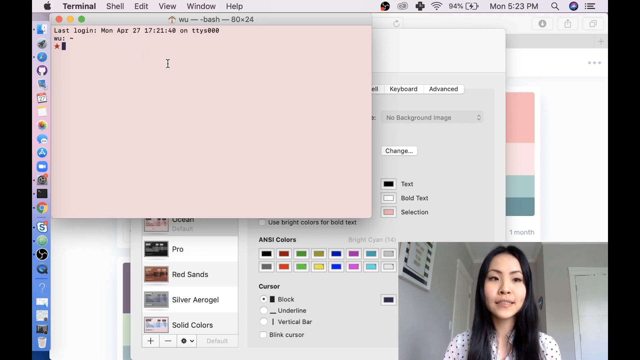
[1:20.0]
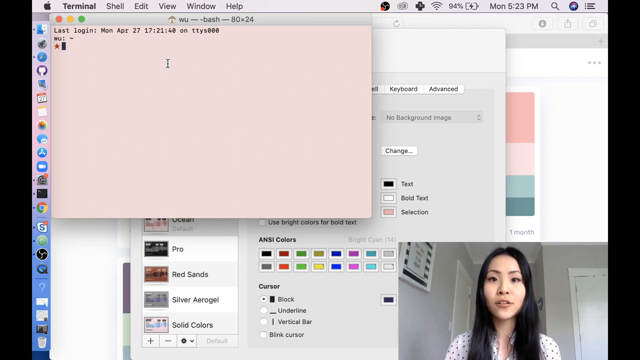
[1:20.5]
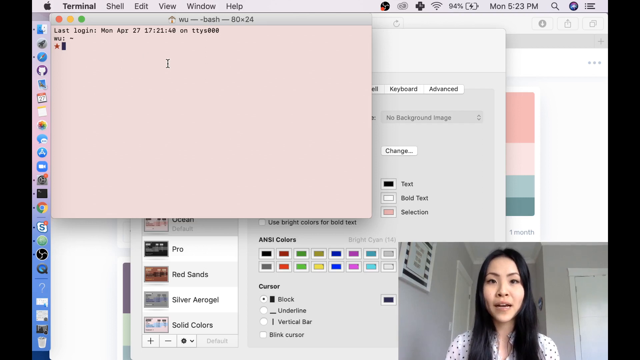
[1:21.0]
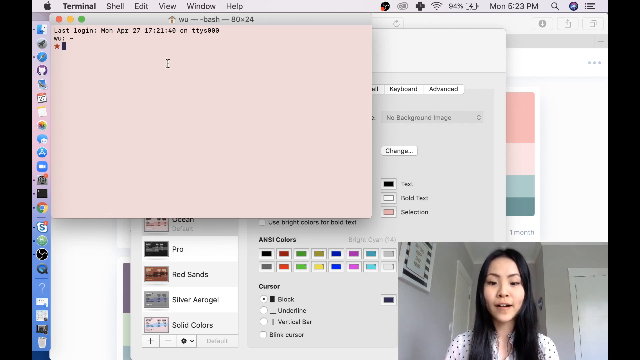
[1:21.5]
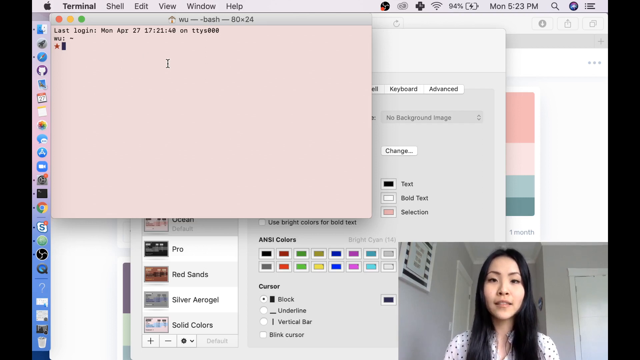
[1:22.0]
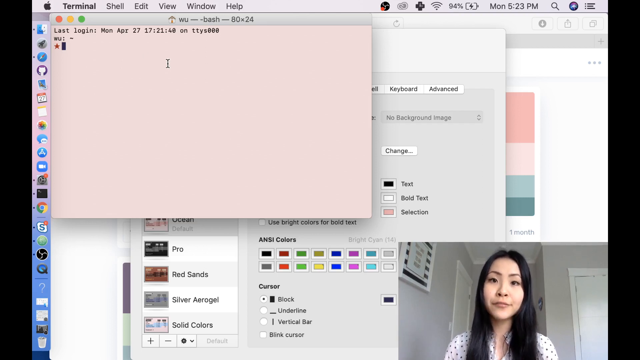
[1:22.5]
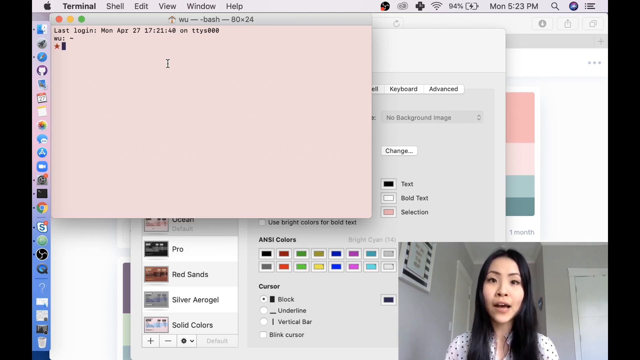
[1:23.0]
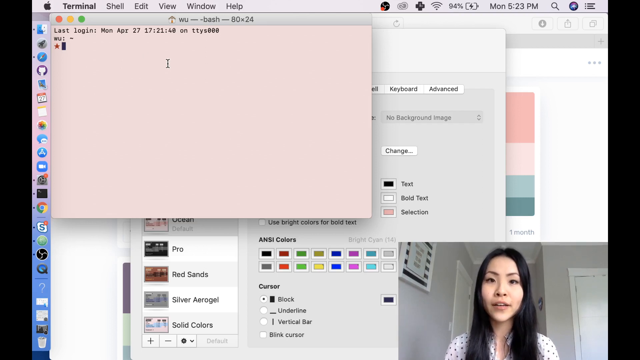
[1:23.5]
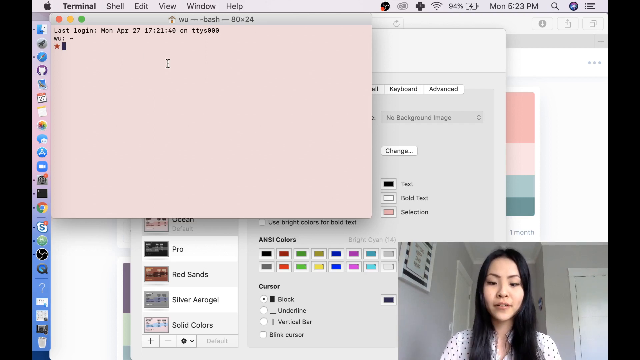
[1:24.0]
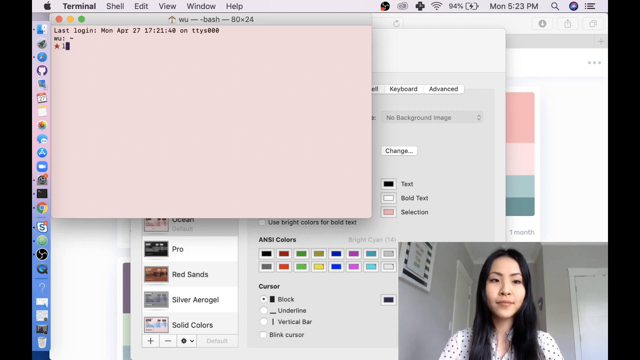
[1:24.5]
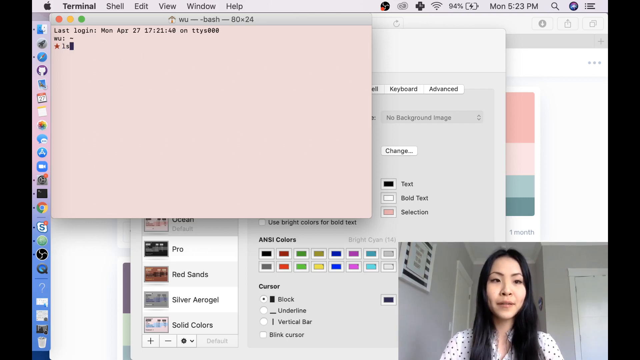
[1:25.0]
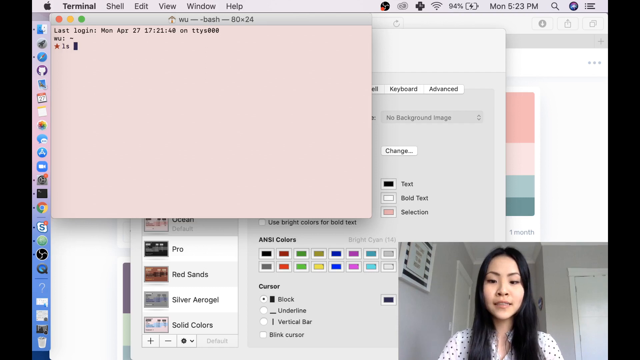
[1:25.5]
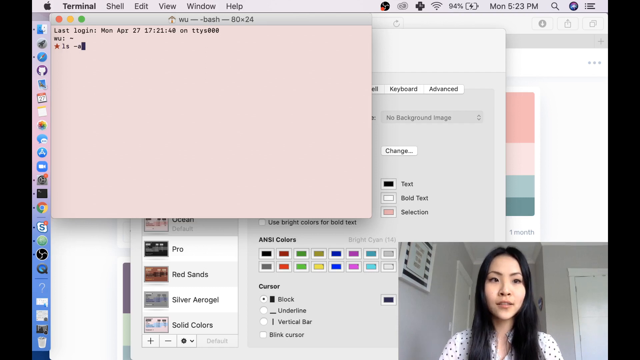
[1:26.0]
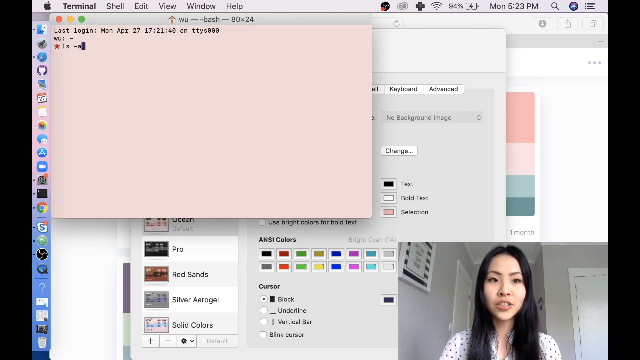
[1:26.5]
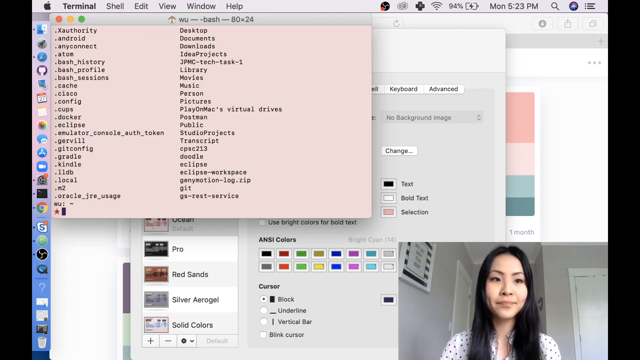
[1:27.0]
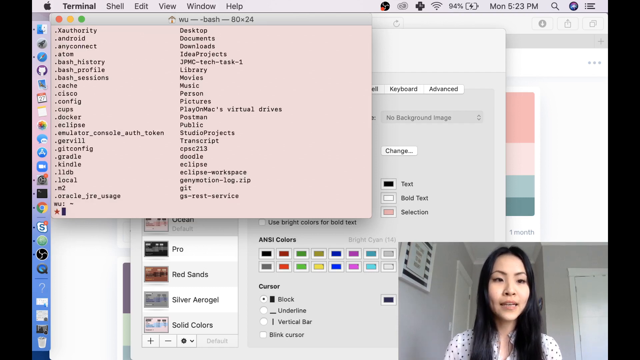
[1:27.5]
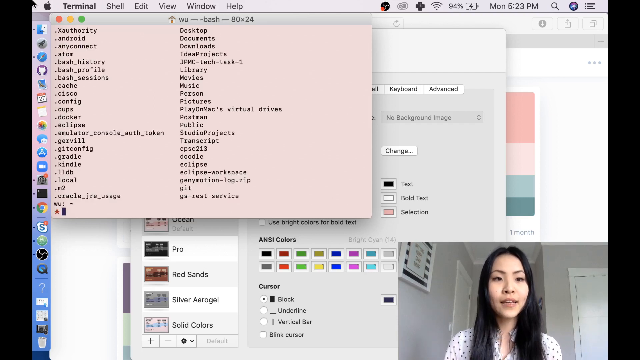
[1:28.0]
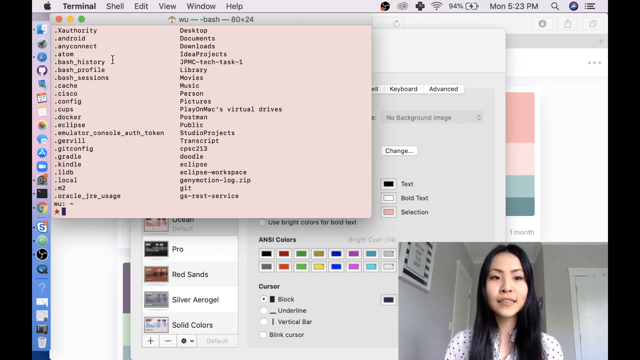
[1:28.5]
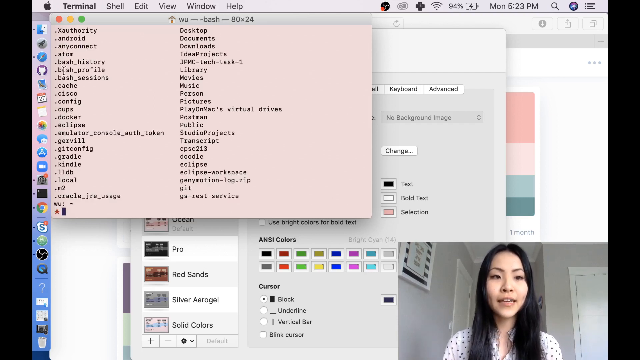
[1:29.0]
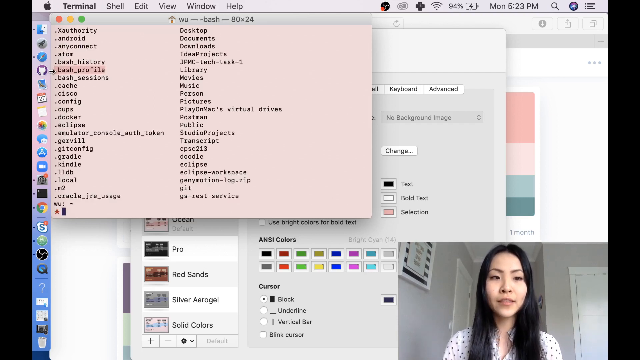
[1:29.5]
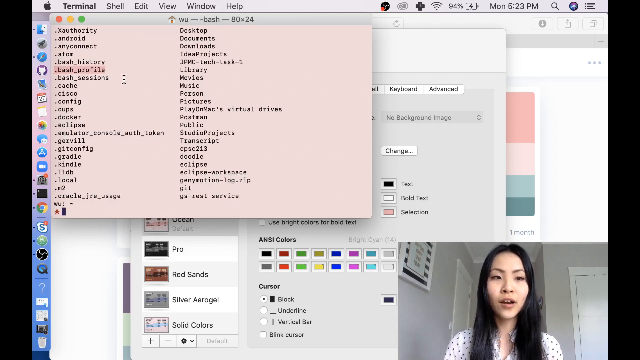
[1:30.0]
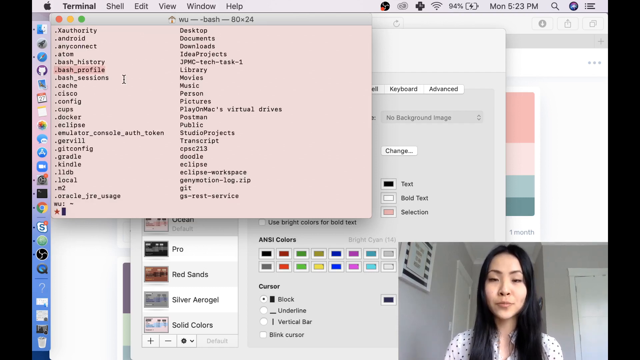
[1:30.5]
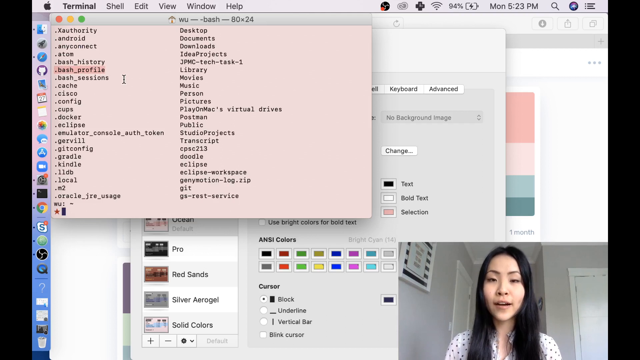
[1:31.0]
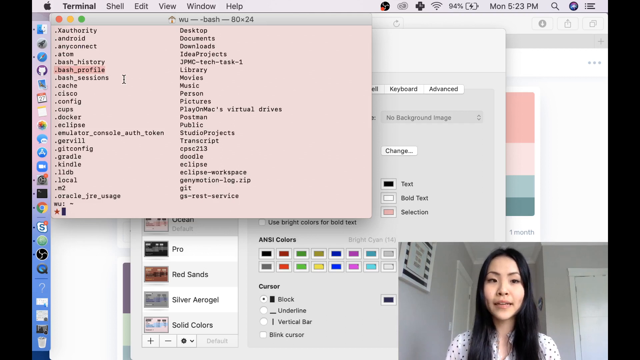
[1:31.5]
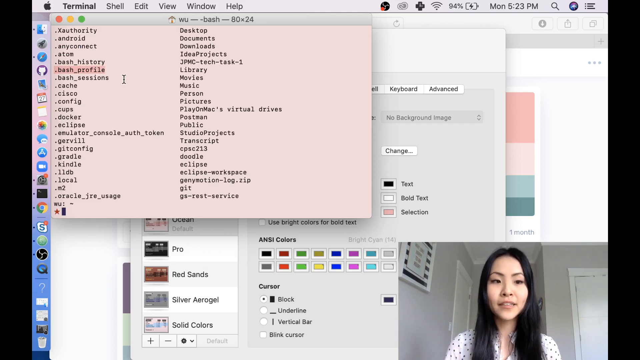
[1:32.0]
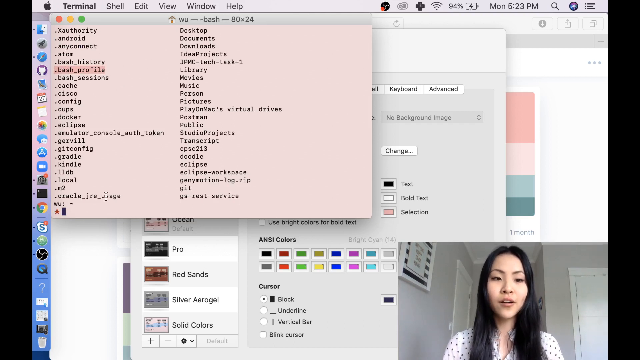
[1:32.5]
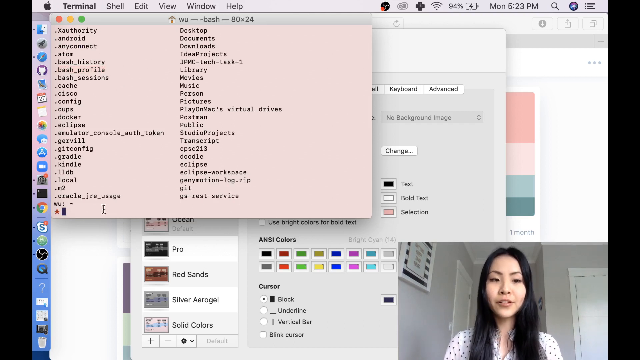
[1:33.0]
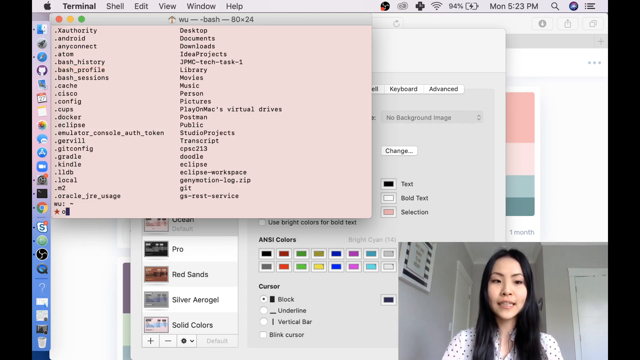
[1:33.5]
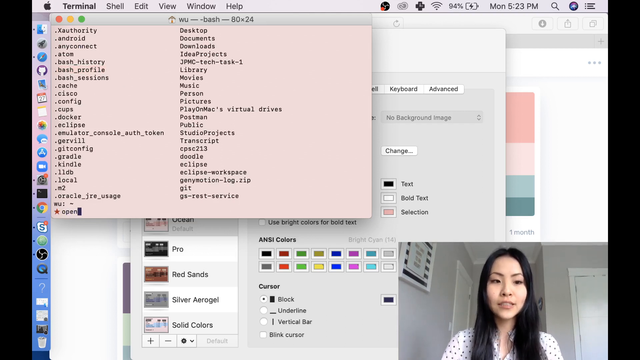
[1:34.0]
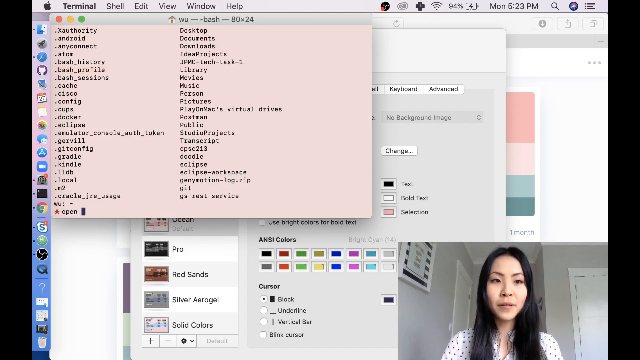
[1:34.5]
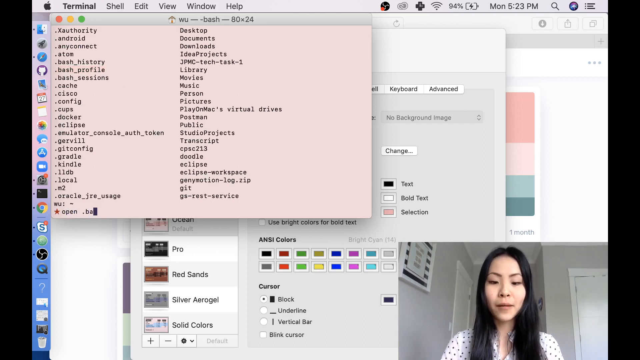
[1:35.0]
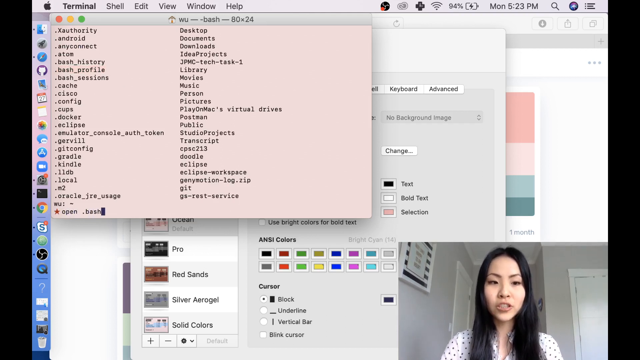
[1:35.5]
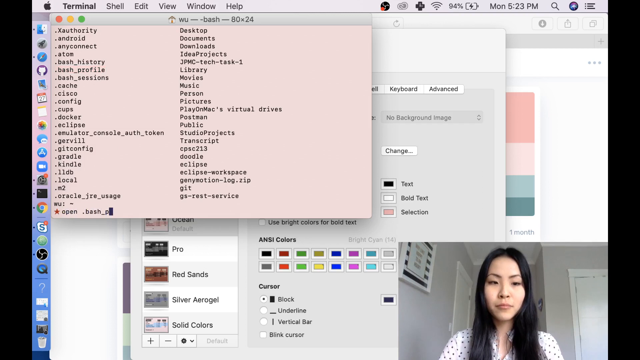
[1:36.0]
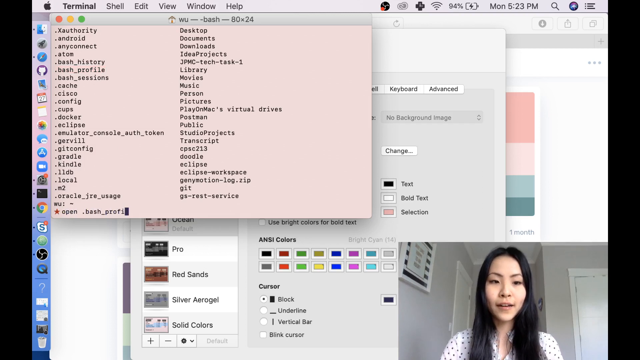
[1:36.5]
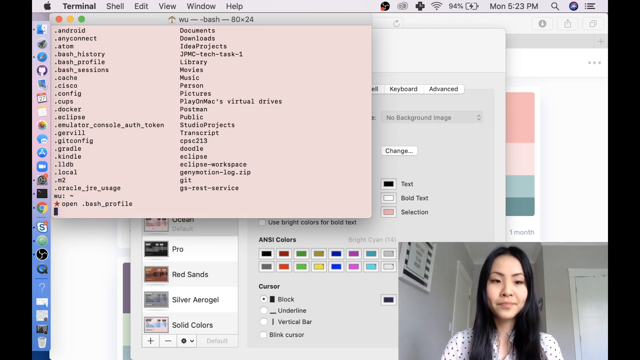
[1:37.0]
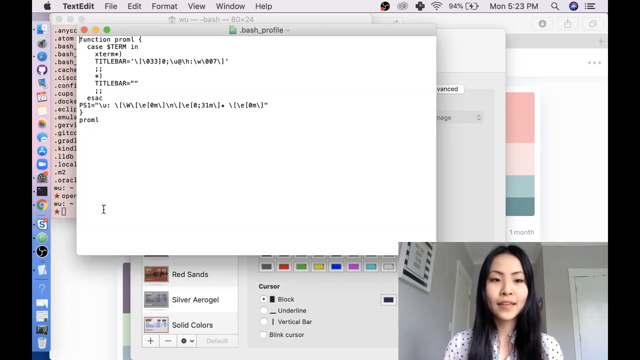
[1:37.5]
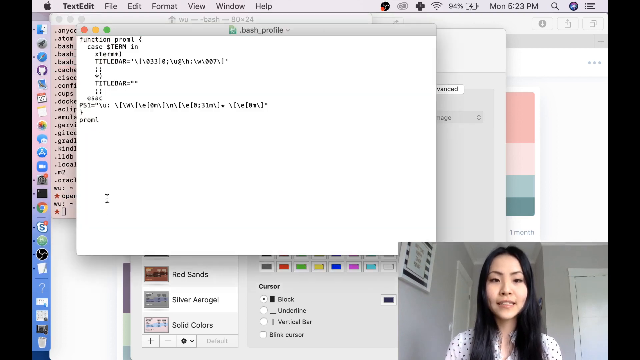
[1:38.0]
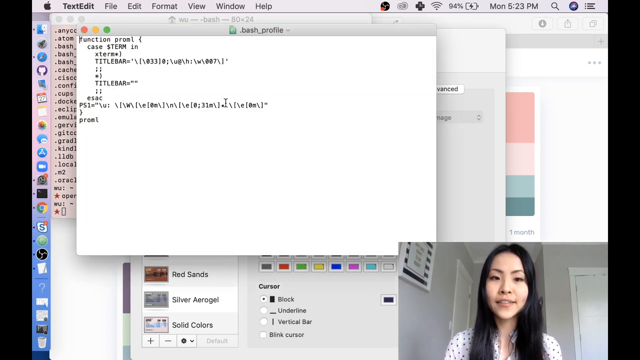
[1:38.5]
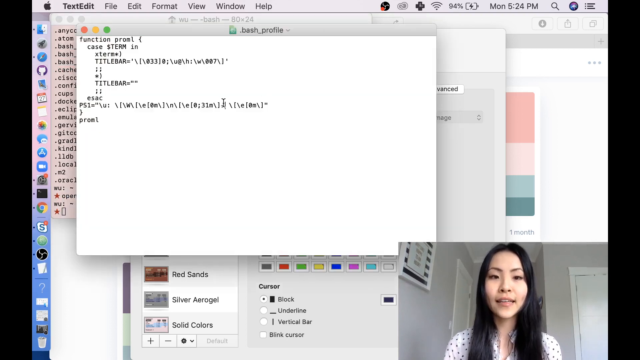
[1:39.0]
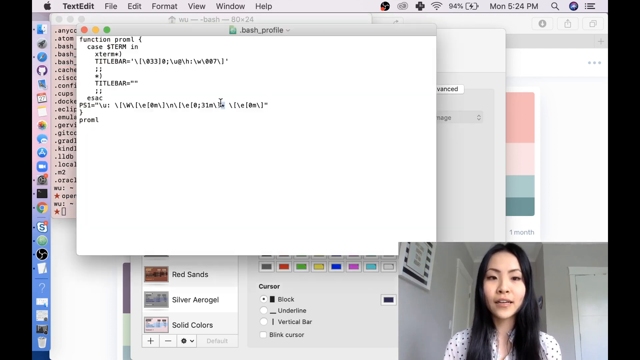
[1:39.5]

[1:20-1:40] A woman is in the bottom right-hand section of the screen, and a man is in the bottom left-hand section. Code is shown on the screen, and the code in a block is shifted and changed.